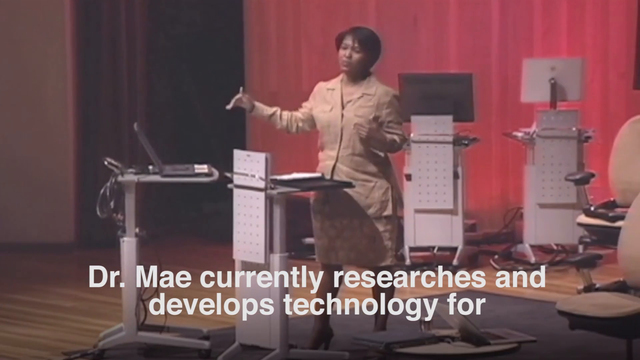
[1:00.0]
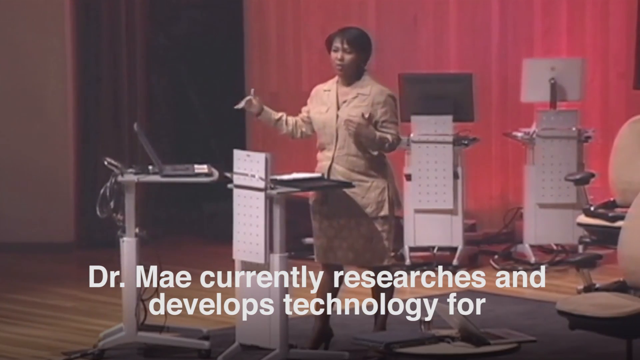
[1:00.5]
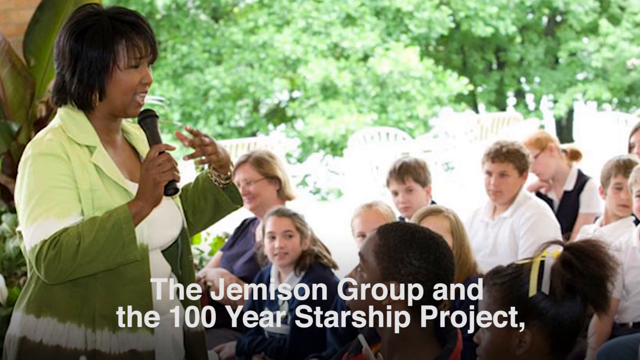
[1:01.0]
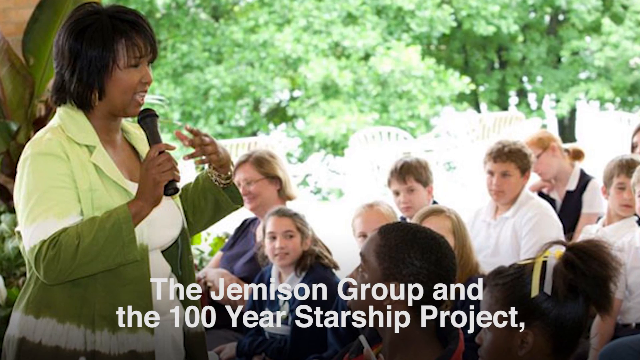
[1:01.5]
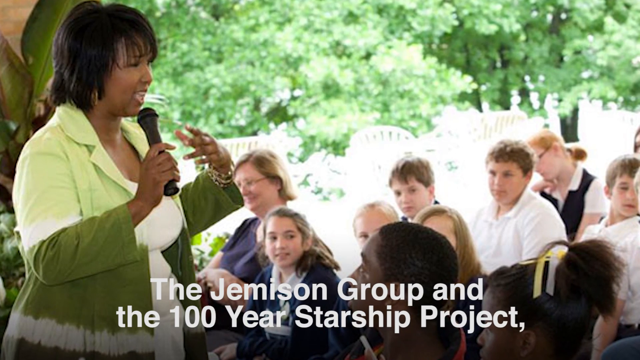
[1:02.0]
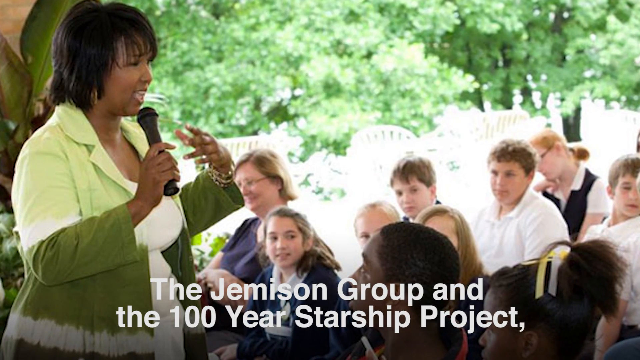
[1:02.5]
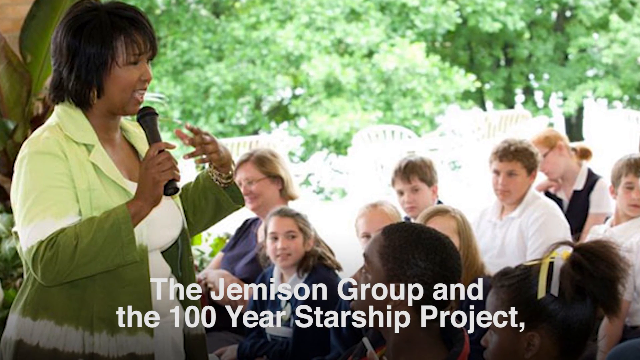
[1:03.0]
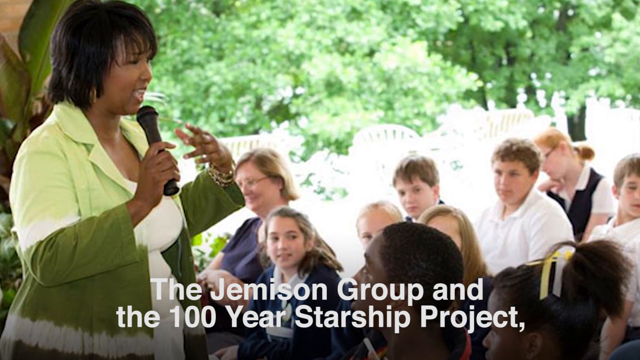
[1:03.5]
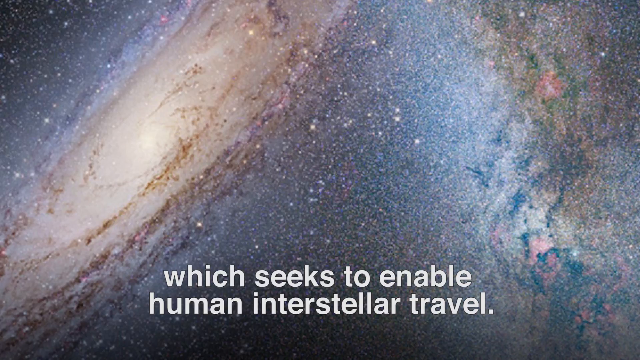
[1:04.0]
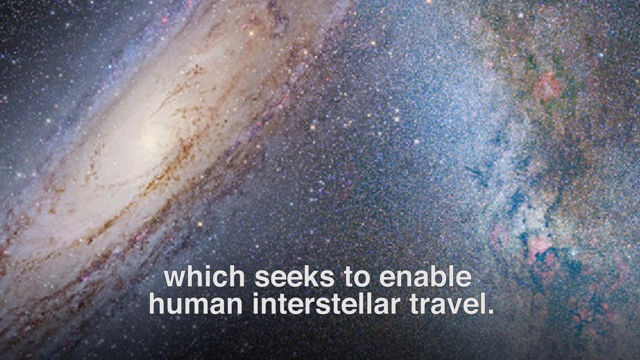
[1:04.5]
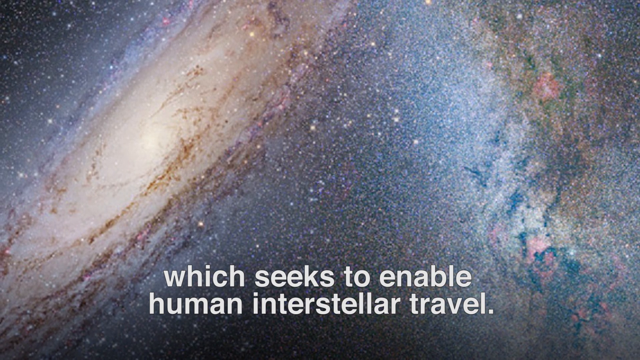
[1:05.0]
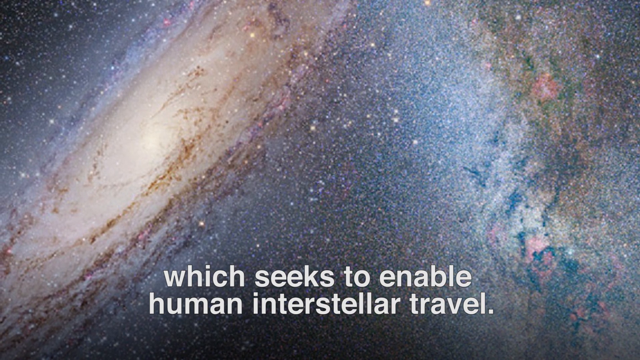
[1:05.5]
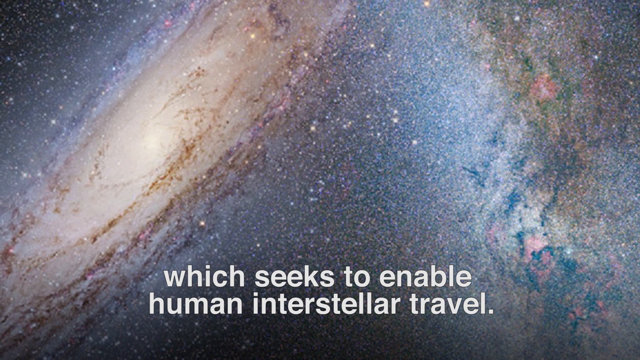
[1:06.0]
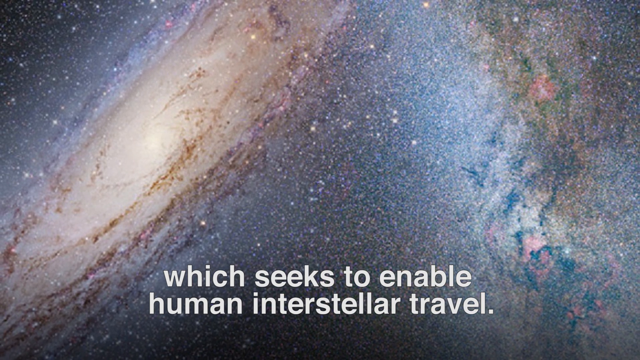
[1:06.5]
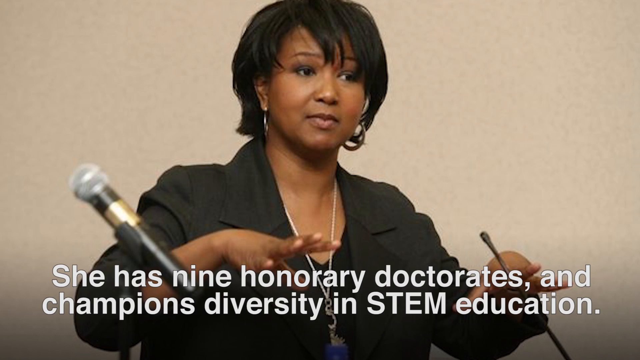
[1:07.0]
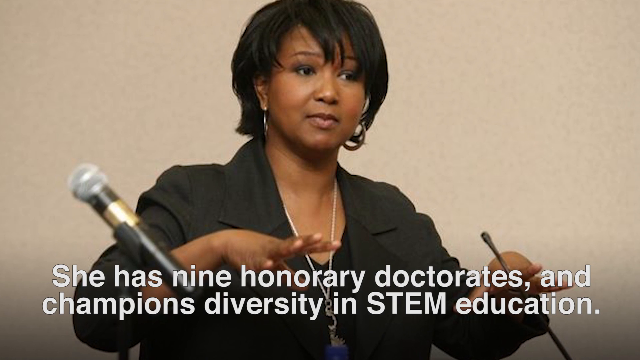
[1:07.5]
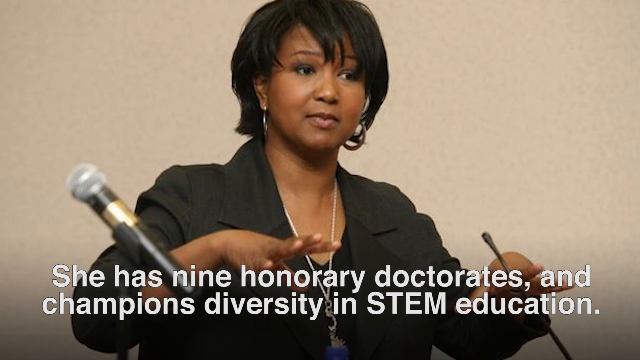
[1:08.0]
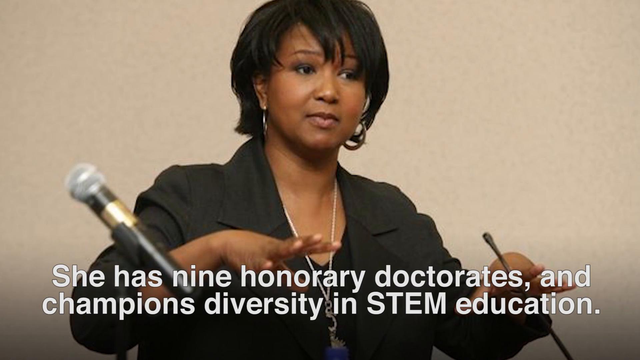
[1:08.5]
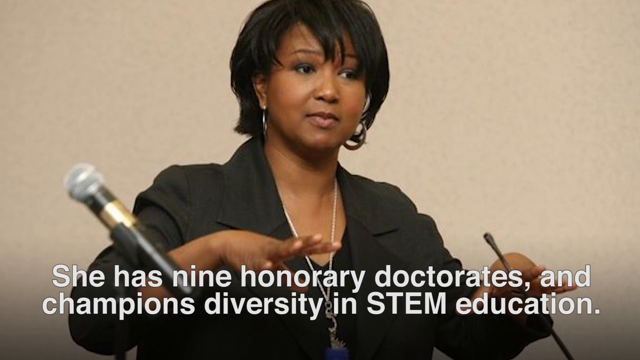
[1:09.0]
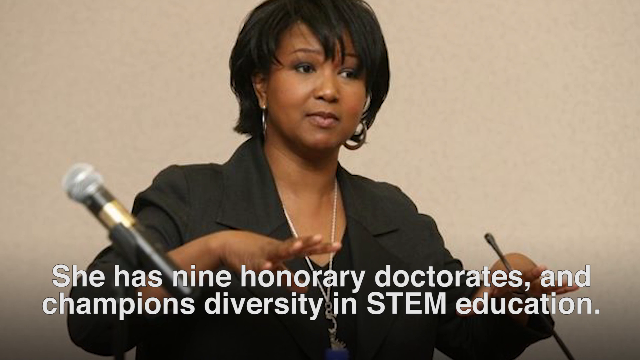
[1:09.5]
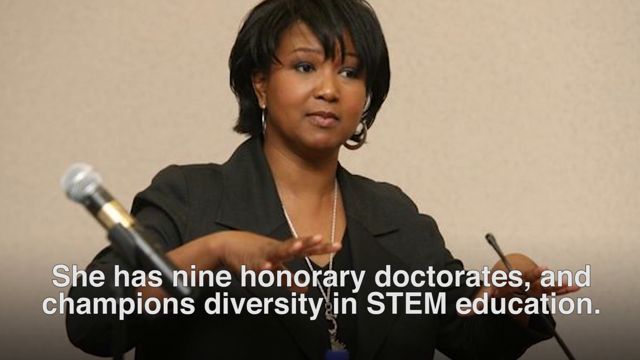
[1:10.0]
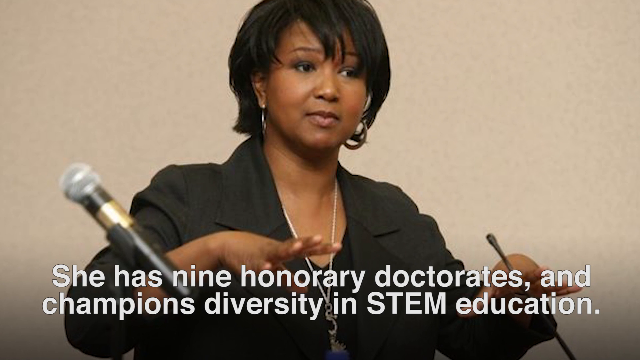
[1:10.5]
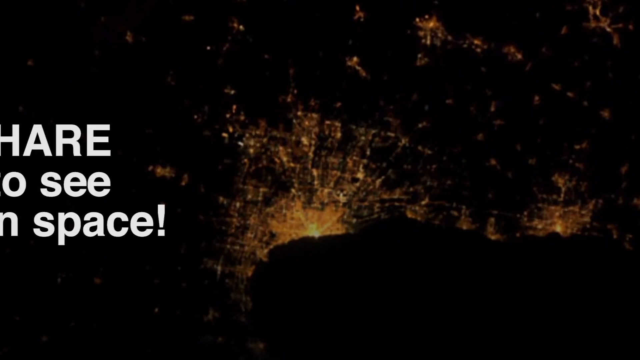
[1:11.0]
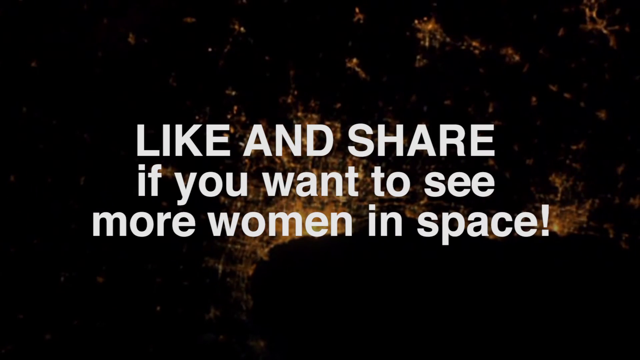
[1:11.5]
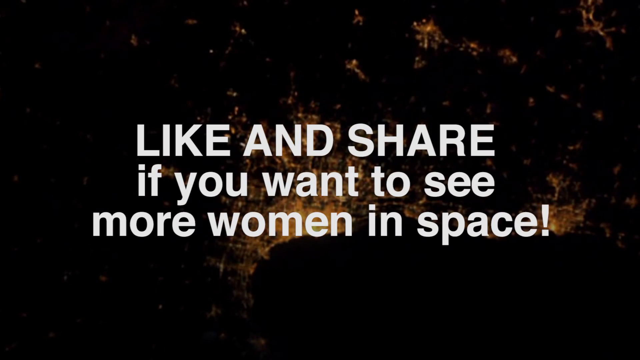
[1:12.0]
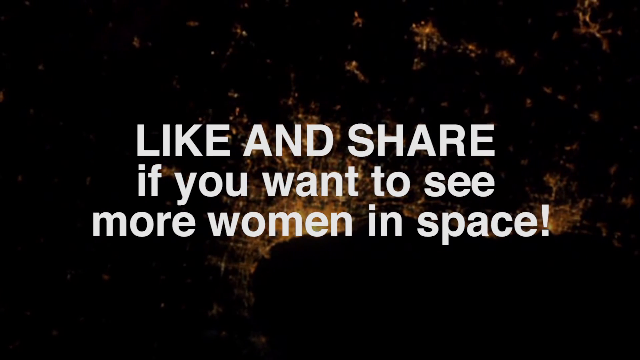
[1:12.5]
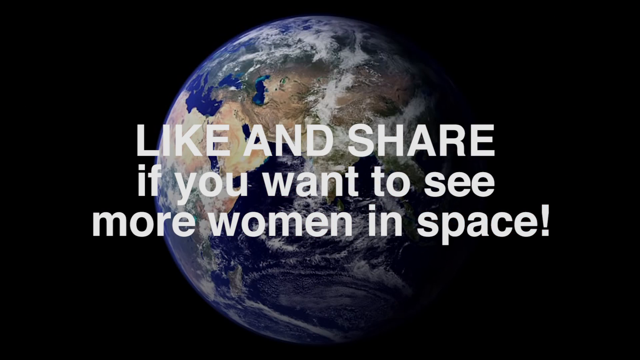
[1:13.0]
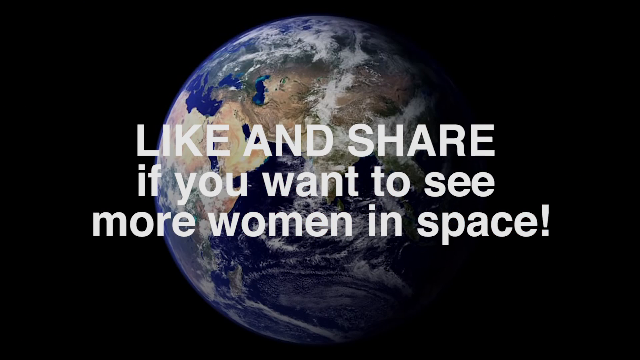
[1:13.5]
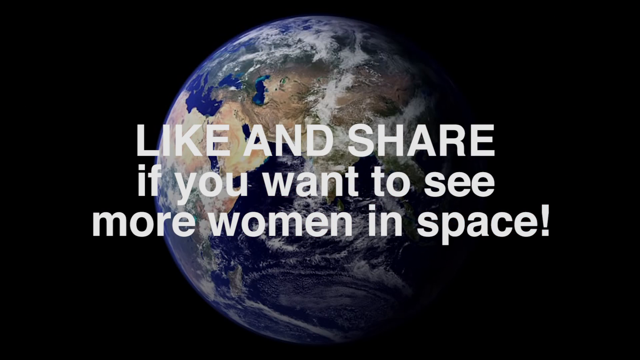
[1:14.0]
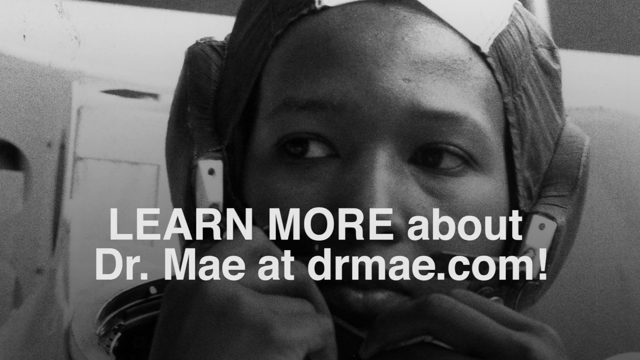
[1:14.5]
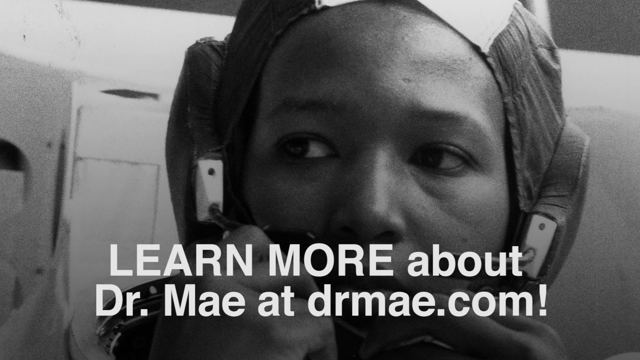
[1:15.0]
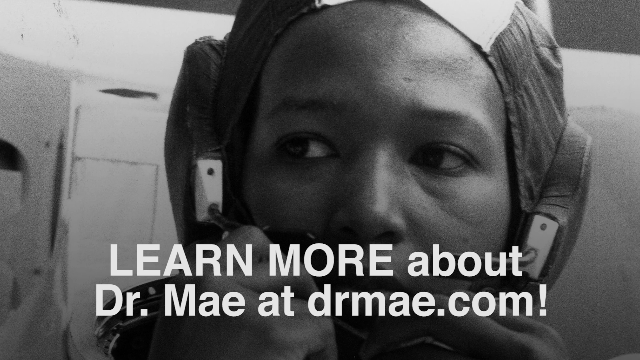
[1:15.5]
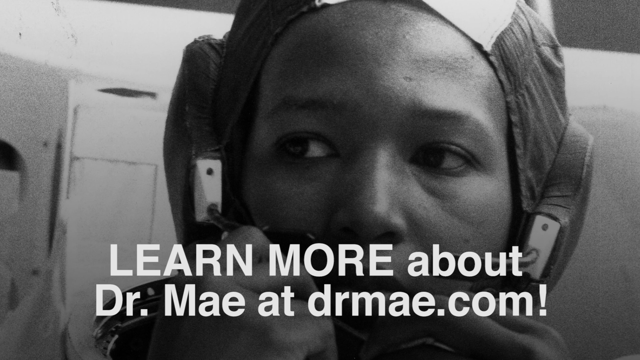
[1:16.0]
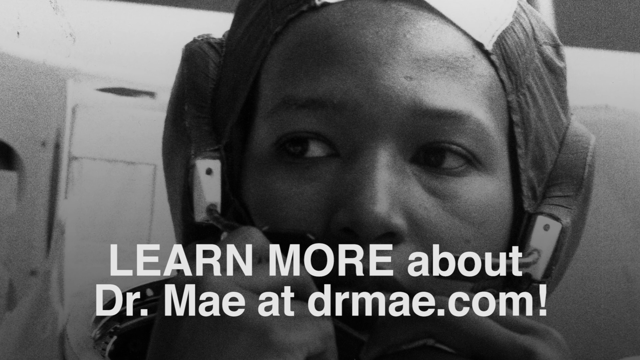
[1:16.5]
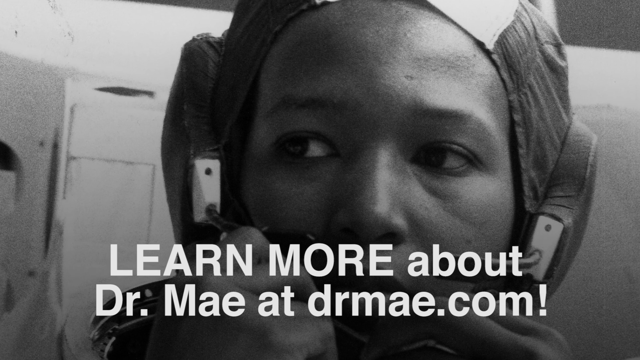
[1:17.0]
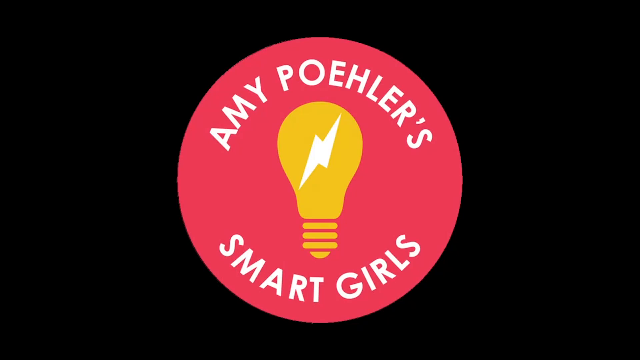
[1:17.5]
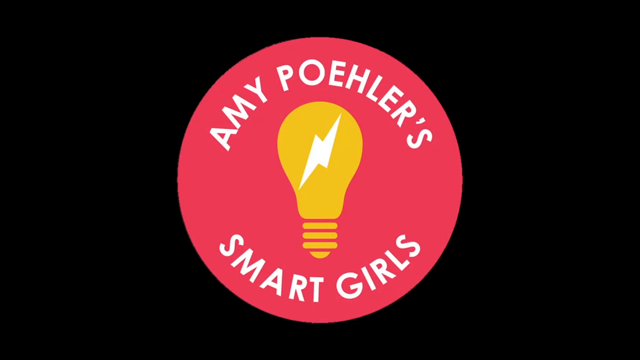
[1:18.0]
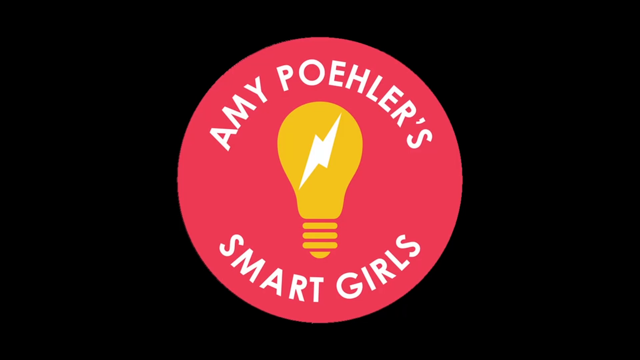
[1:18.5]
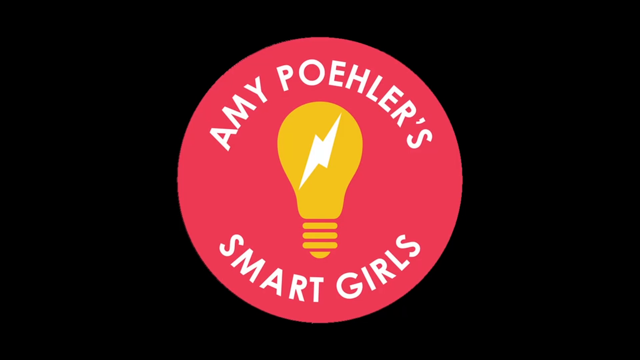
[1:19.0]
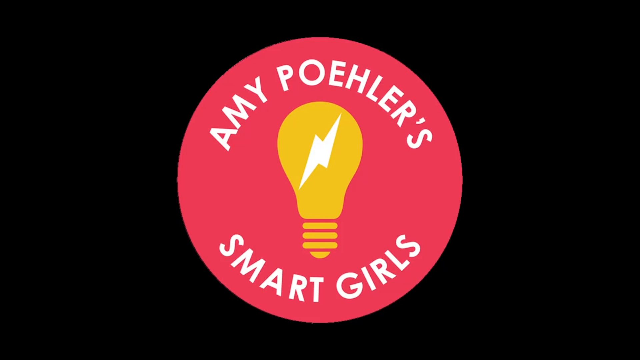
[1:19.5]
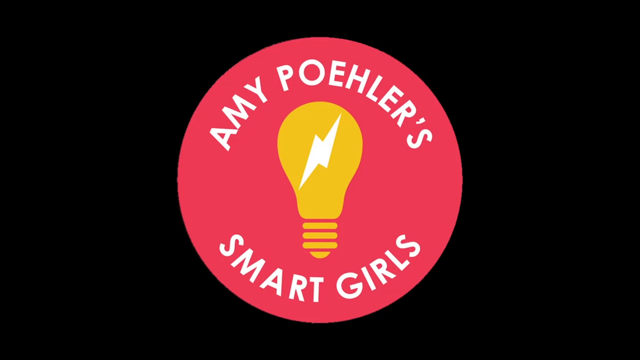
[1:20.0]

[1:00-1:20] The video states that Dr. May currently researches and develops technology for the Jameson Group and the 100 Years Starship Project, which seeks to enable human interstellar travel. She has nine honorary doctorates and champions diversity in STEM education. A message asks viewers to like and share if they want to see more women in space. The final part of the video says to learn more about Dr. May at DRMAP.com.